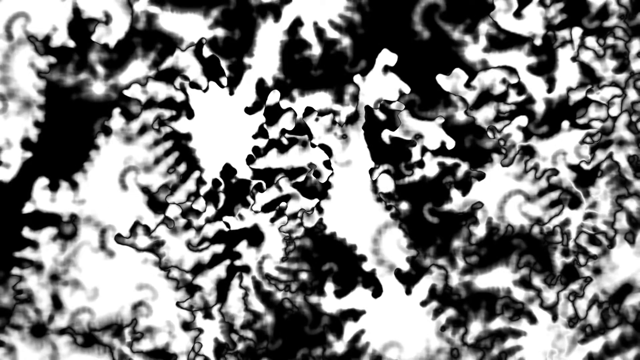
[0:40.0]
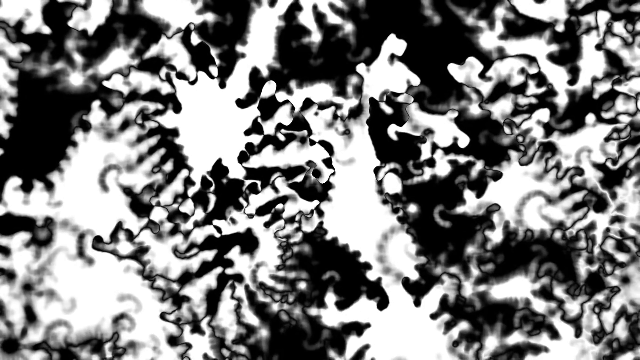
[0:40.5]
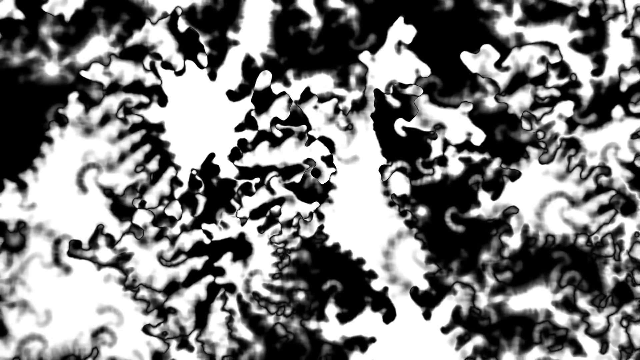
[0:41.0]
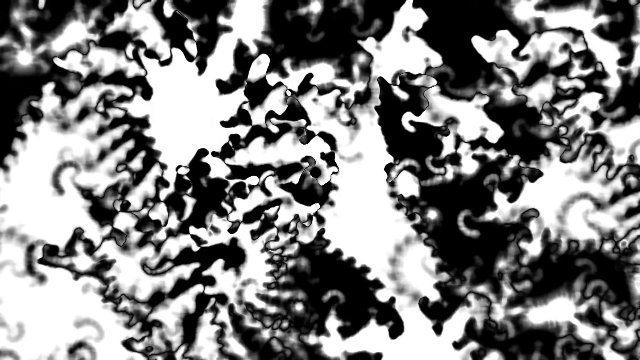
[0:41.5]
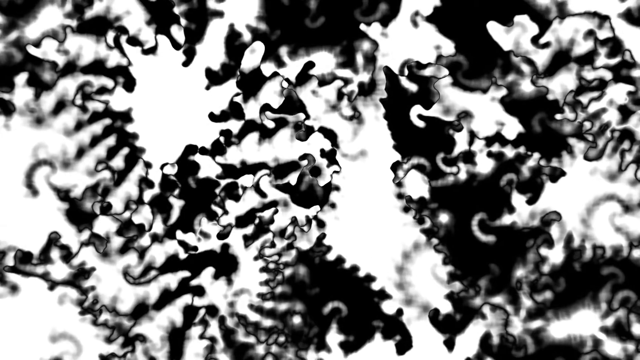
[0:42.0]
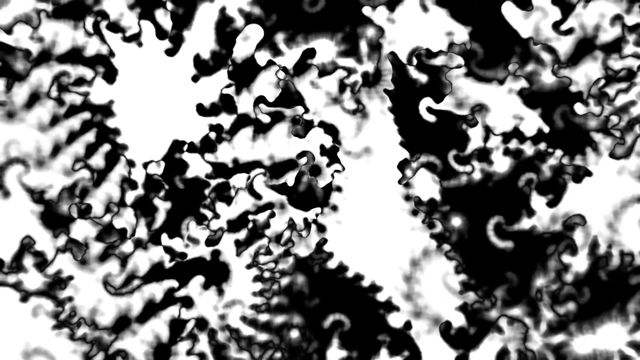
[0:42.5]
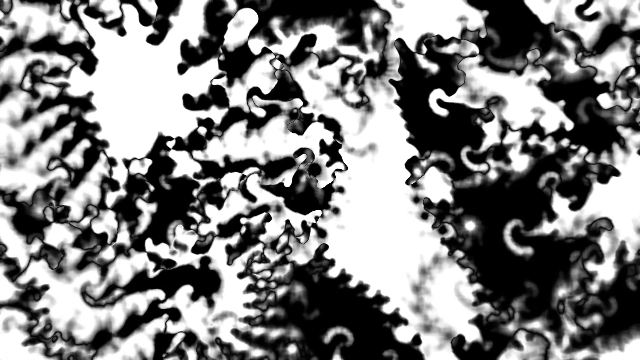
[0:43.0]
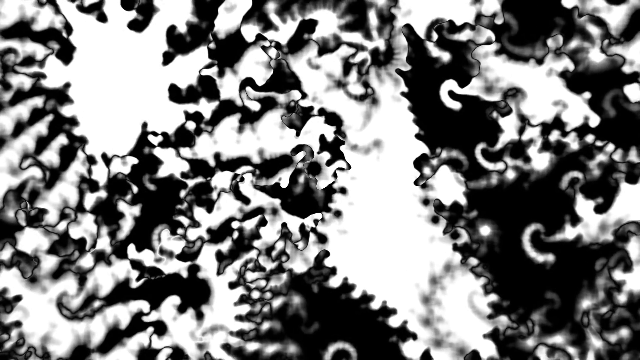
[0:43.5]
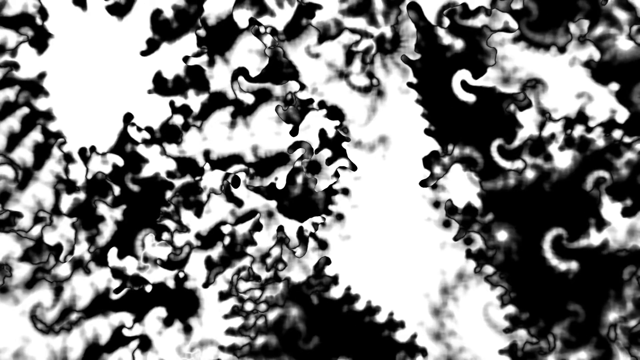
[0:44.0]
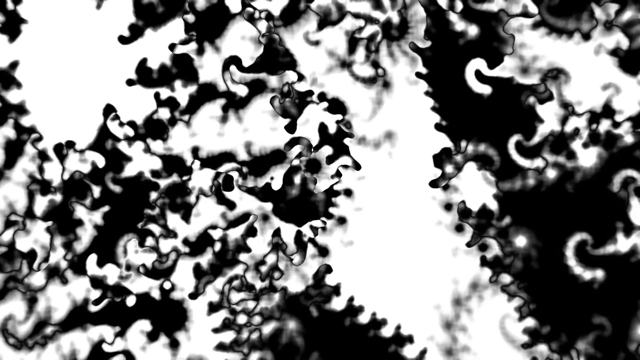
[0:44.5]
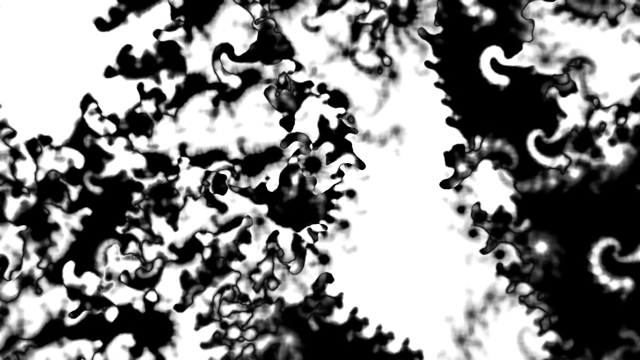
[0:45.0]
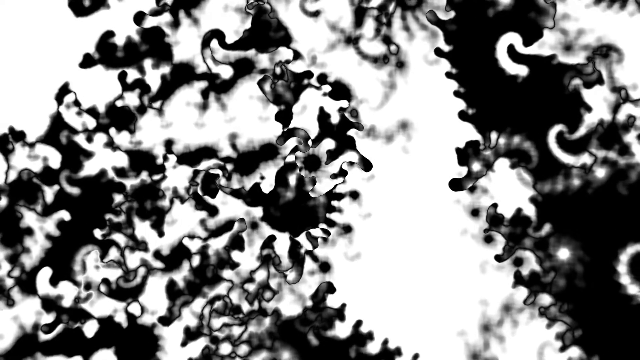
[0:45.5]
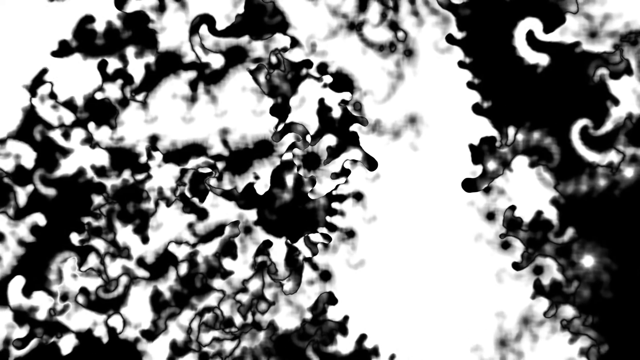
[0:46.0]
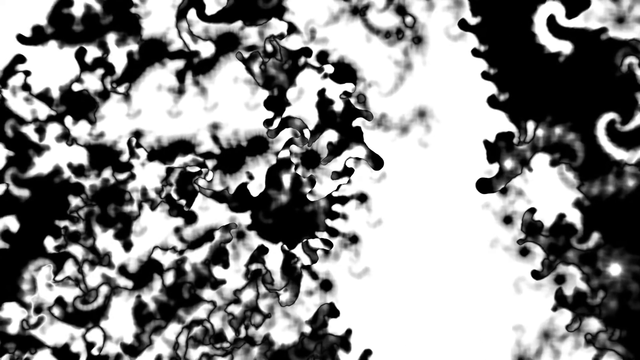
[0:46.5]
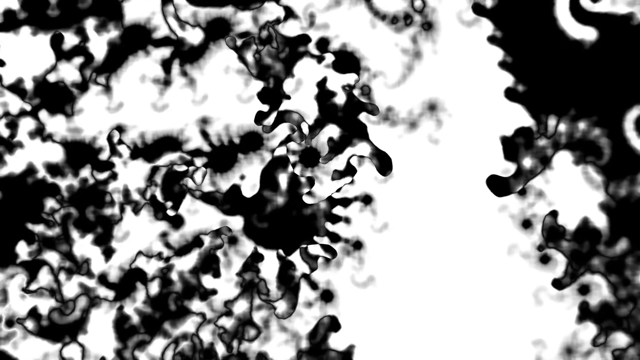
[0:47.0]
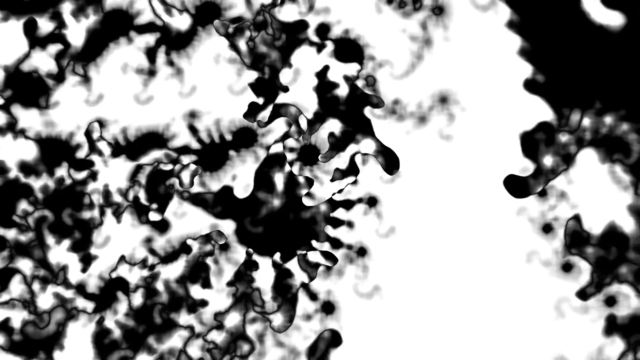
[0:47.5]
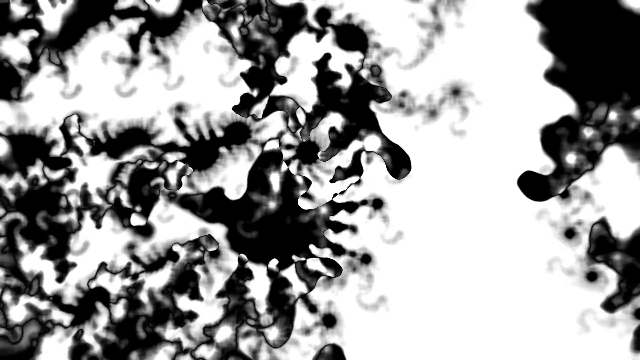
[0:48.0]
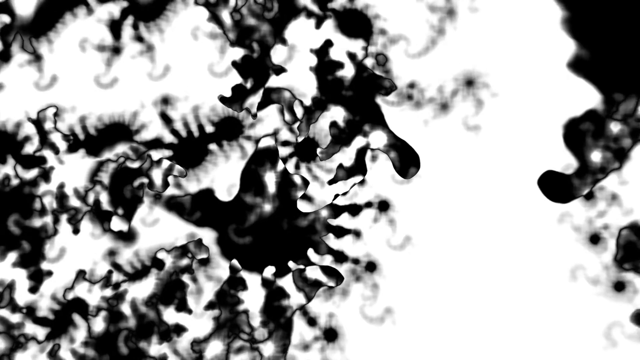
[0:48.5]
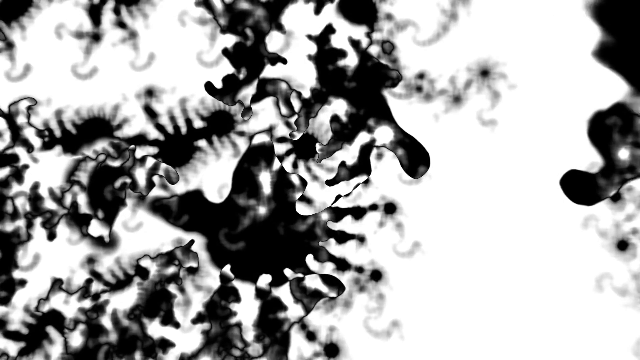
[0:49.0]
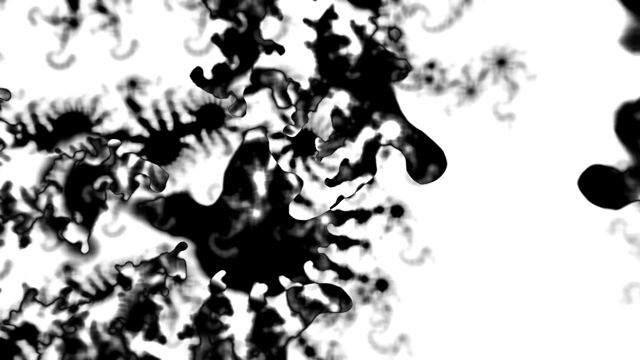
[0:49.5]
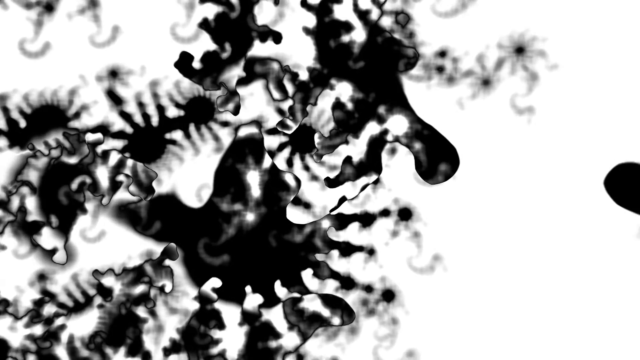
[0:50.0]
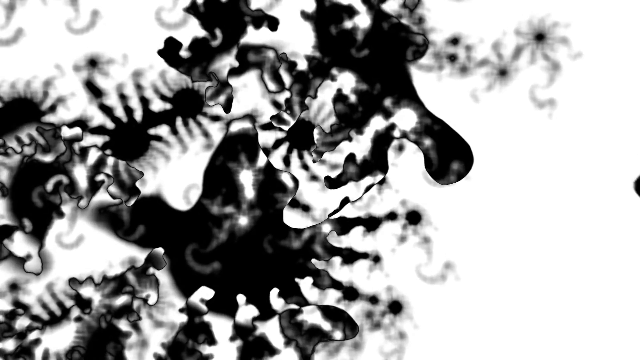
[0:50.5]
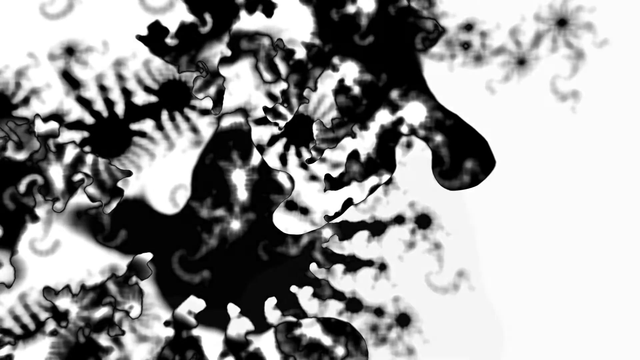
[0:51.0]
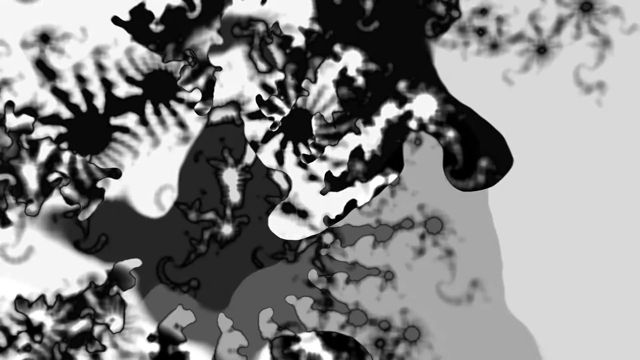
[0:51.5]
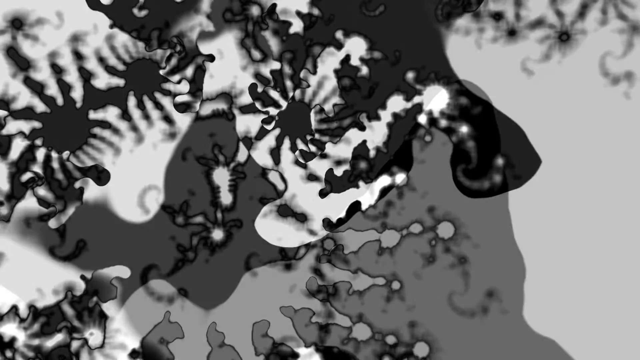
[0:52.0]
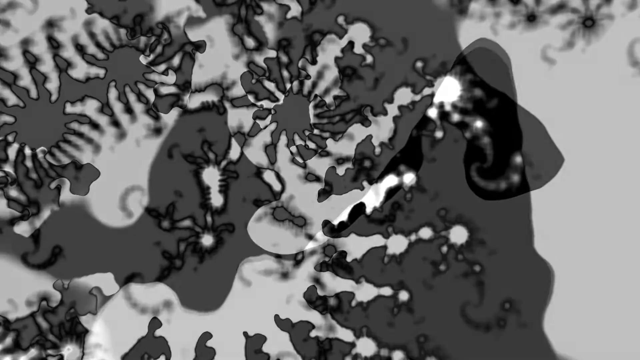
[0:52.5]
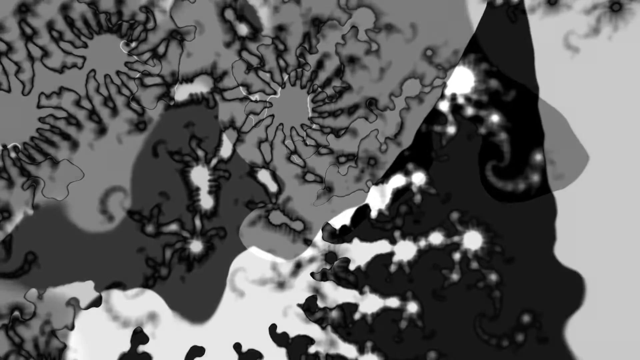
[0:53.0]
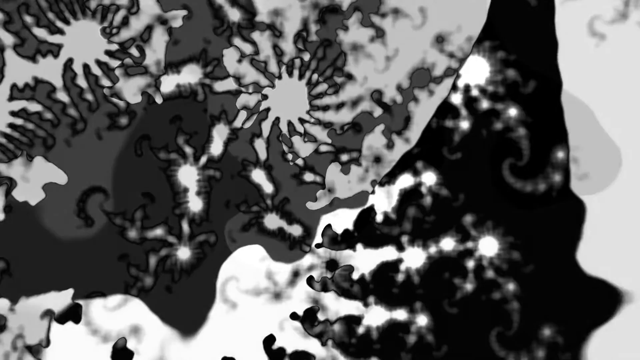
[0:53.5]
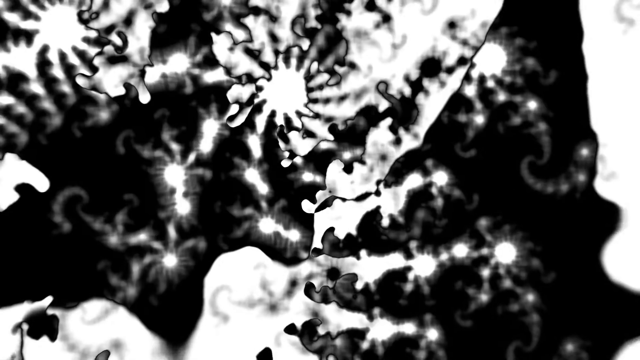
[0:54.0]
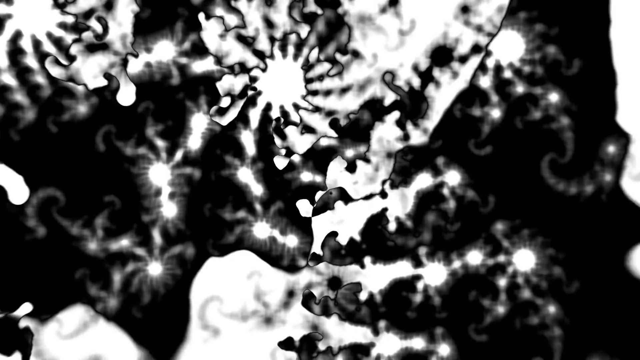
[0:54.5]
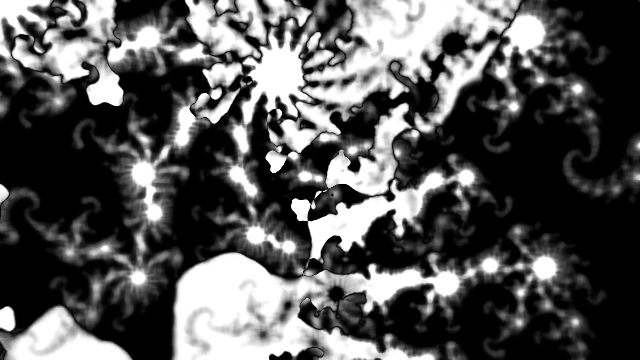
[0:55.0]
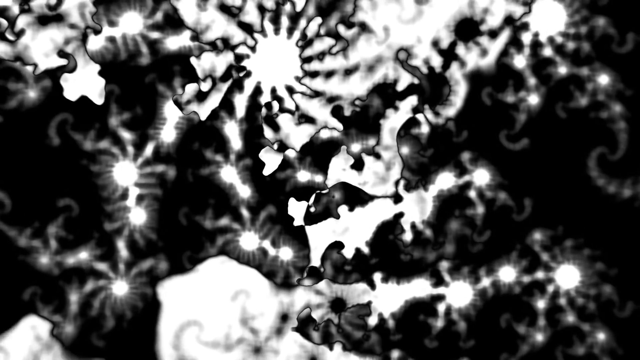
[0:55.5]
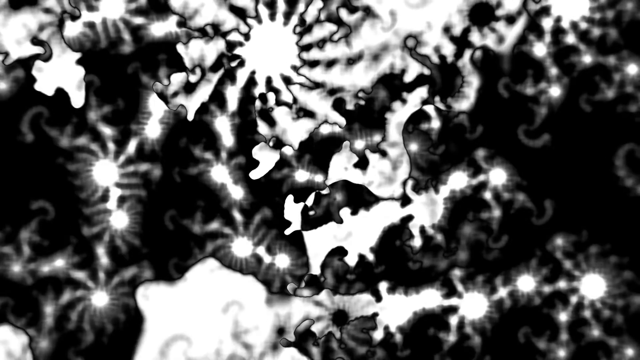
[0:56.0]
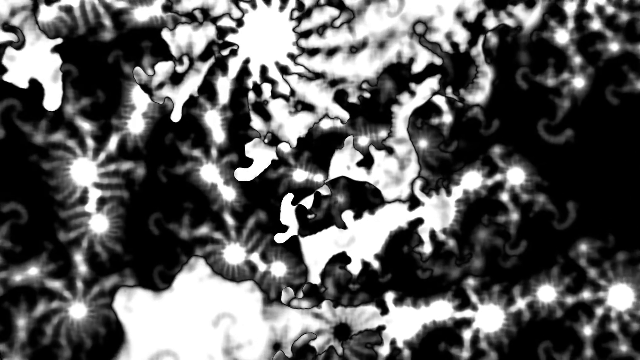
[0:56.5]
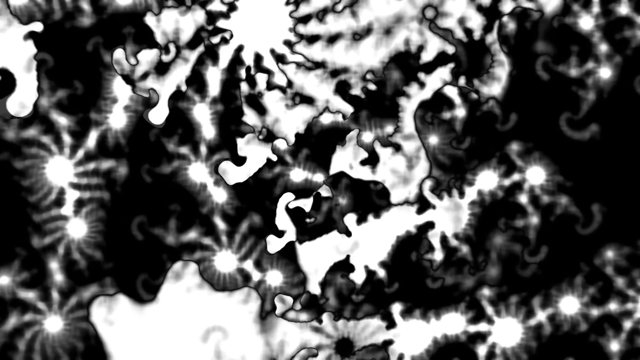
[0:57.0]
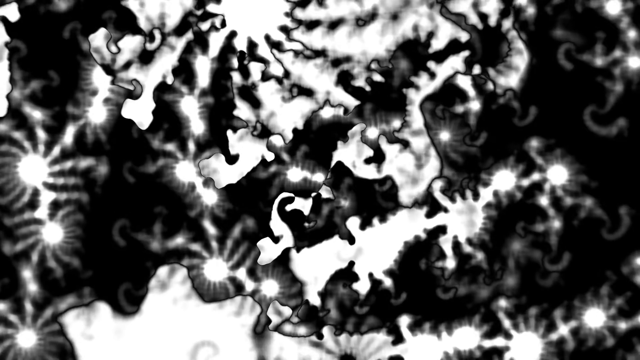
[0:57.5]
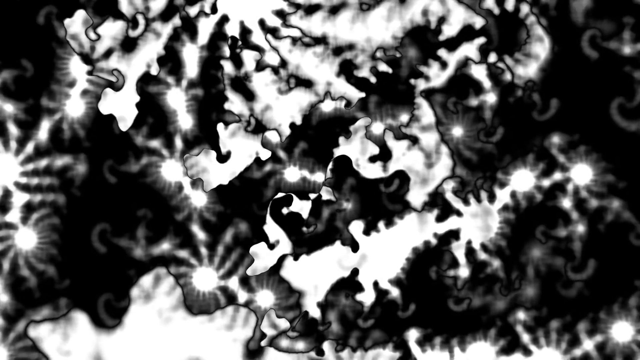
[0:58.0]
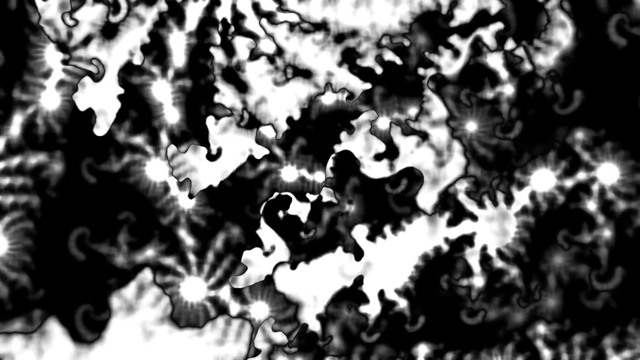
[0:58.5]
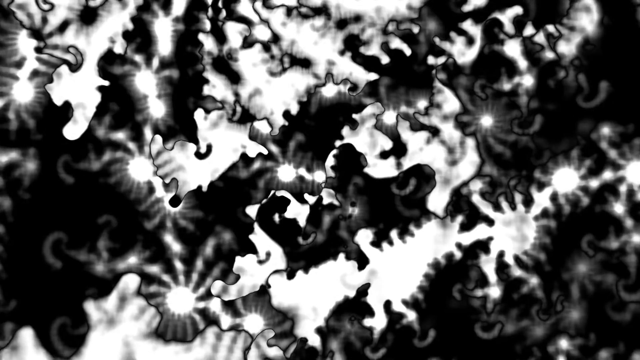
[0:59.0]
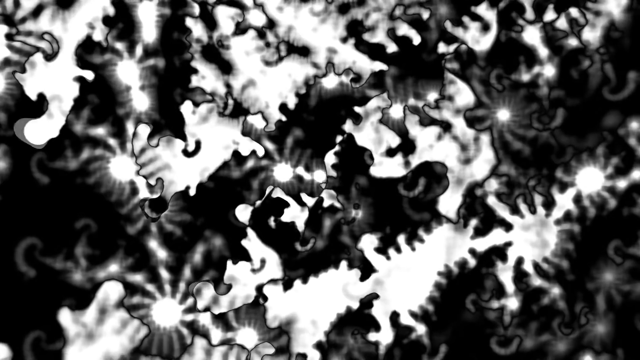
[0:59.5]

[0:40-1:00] The images appear to be still photographs, and the view seems to zoom in continuously. There seems to be a light far away from this planet, and something unclear is shown.